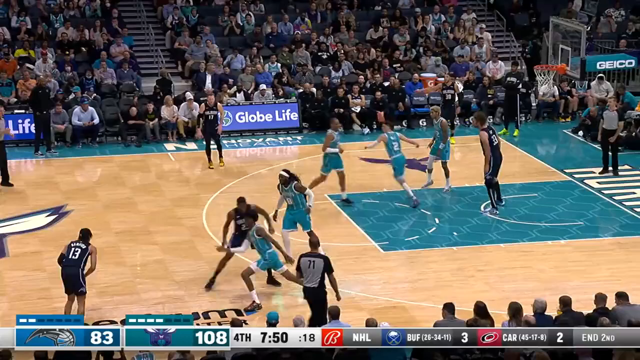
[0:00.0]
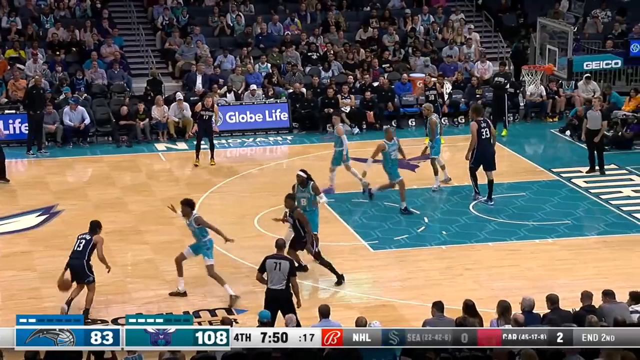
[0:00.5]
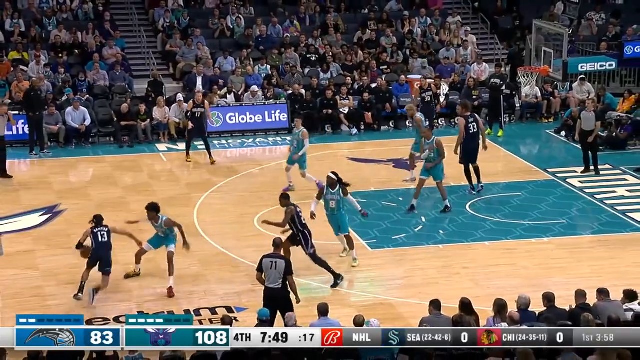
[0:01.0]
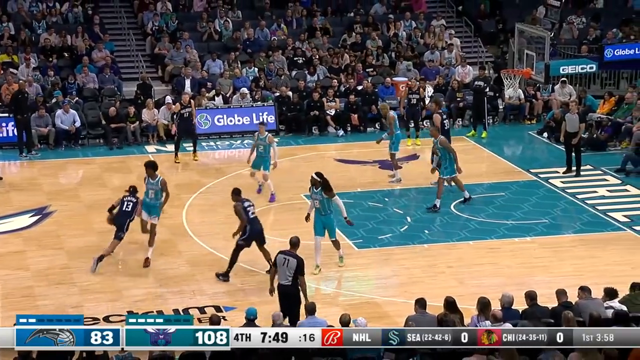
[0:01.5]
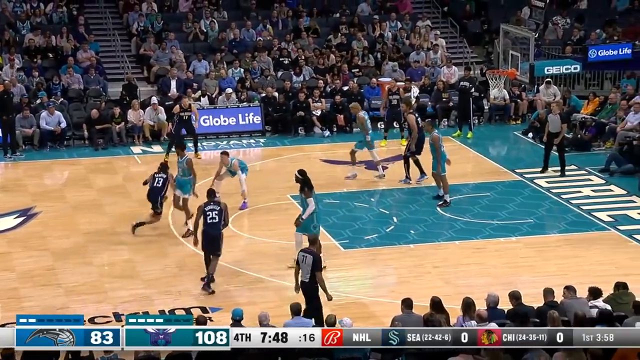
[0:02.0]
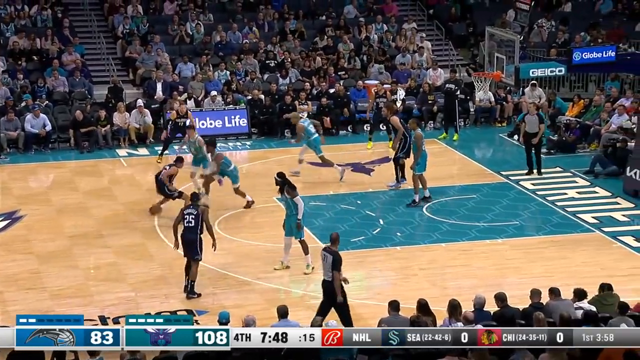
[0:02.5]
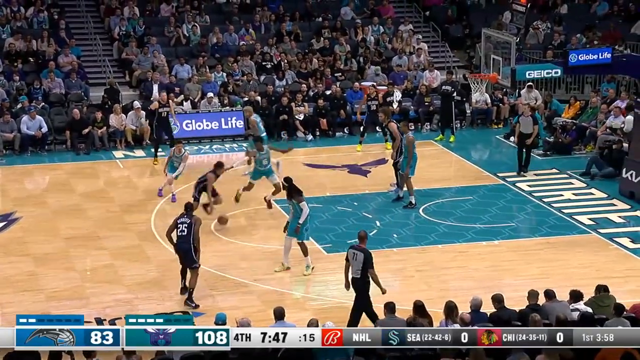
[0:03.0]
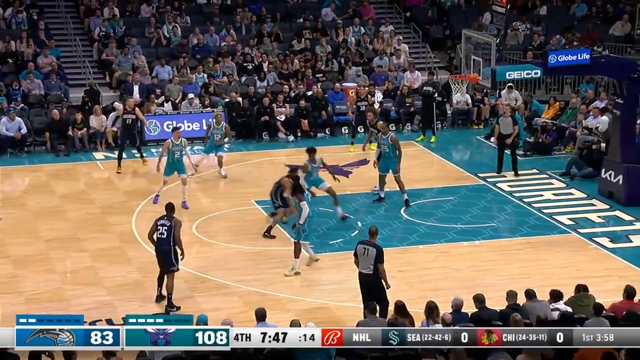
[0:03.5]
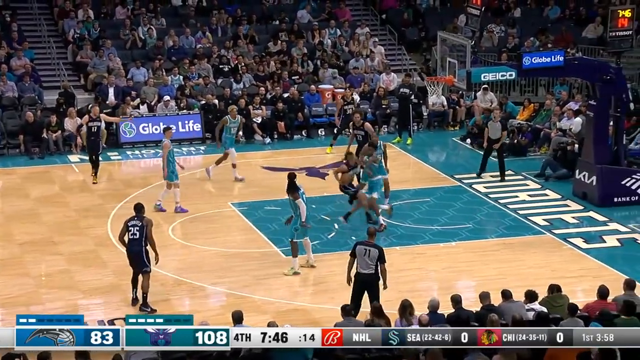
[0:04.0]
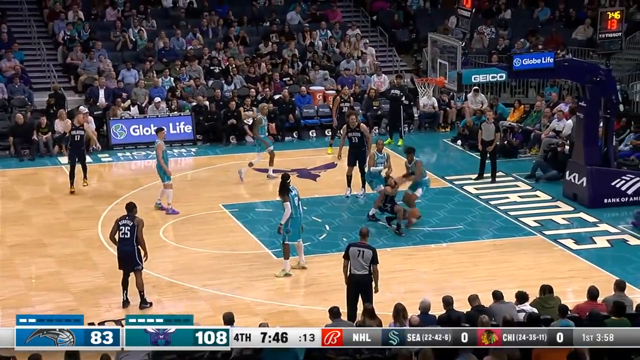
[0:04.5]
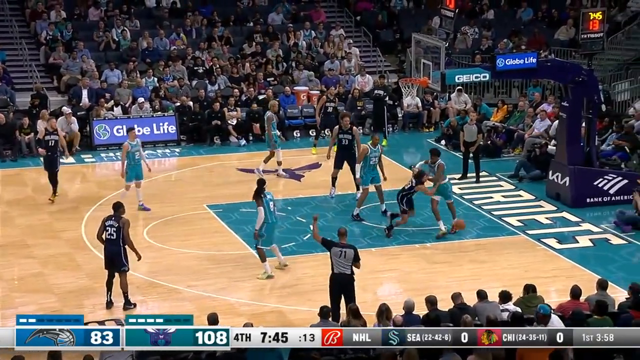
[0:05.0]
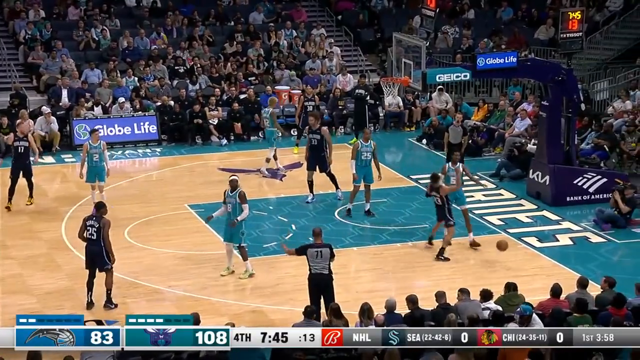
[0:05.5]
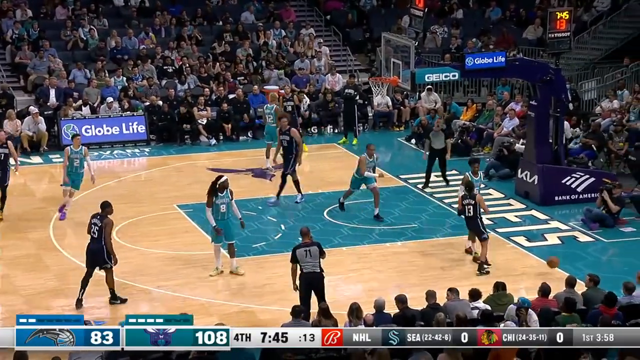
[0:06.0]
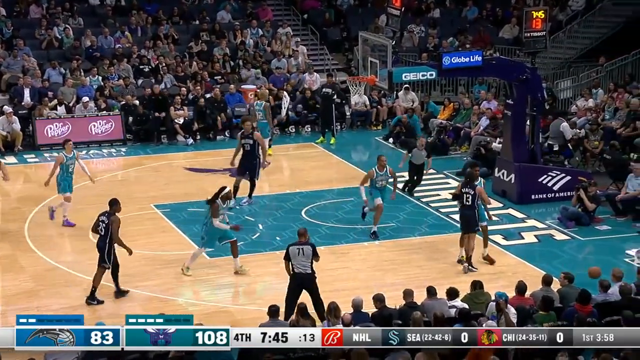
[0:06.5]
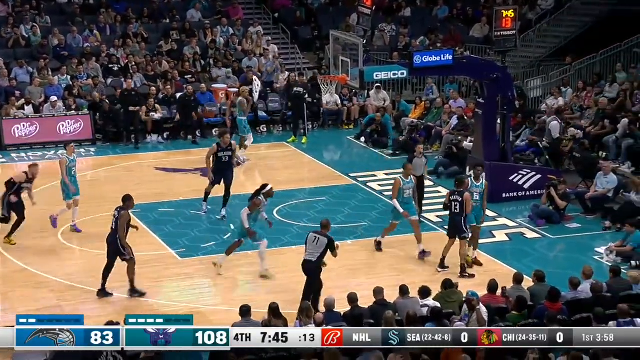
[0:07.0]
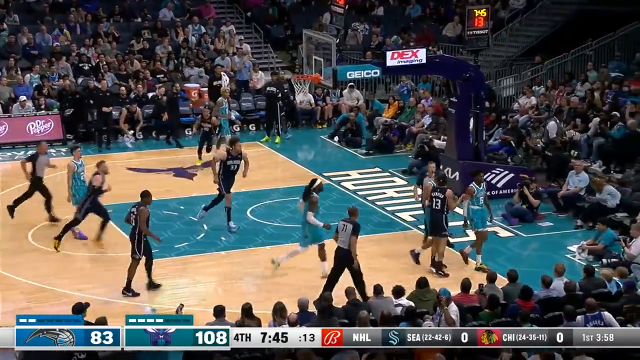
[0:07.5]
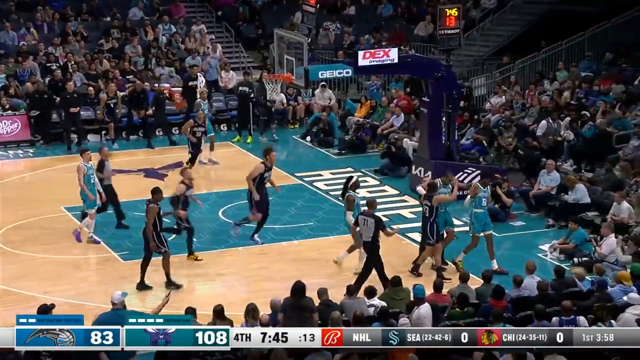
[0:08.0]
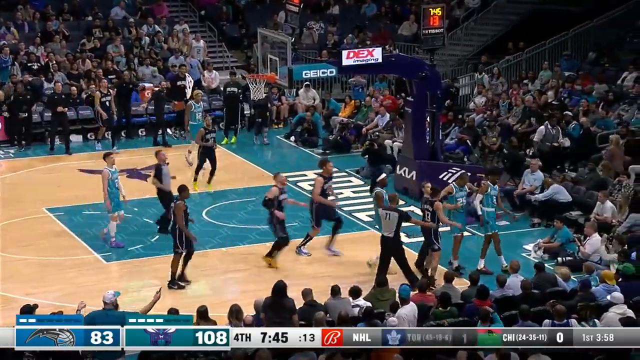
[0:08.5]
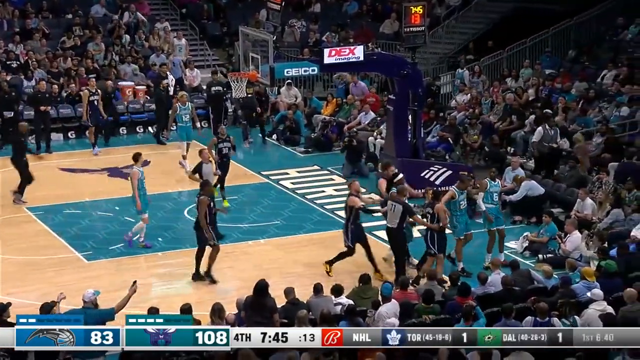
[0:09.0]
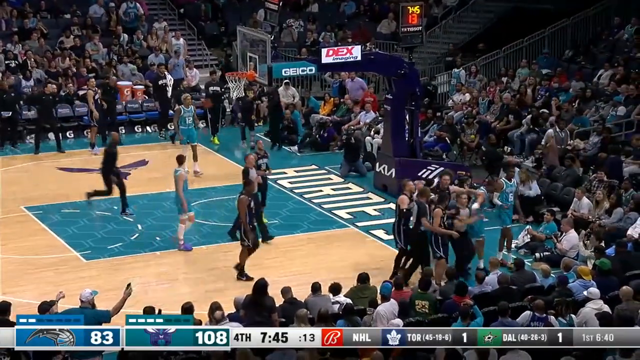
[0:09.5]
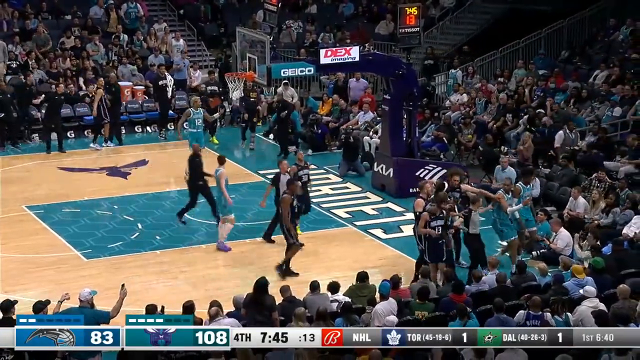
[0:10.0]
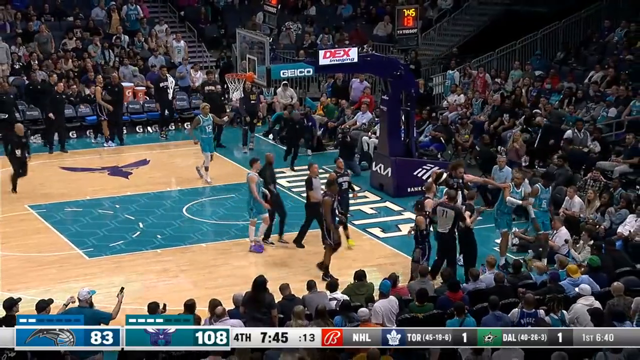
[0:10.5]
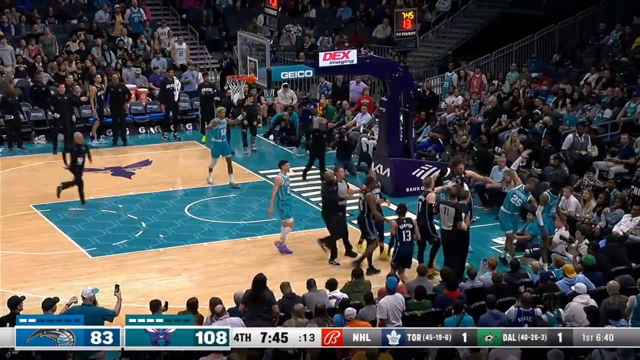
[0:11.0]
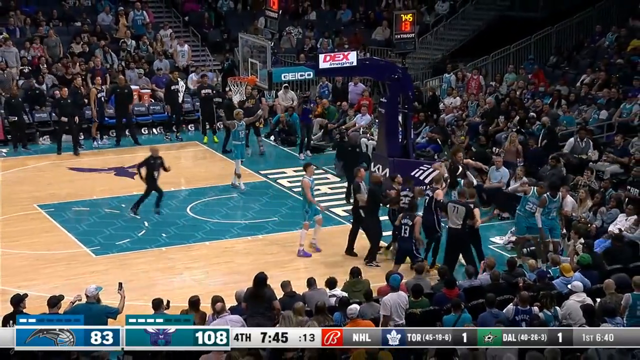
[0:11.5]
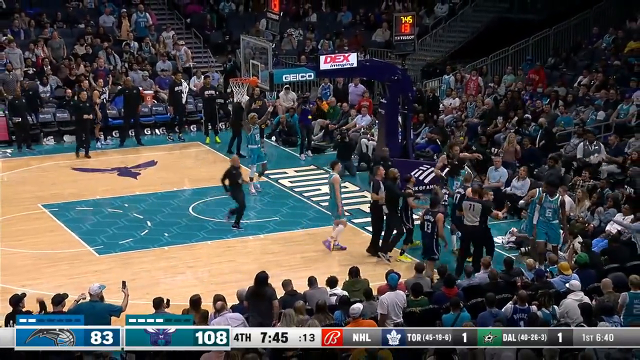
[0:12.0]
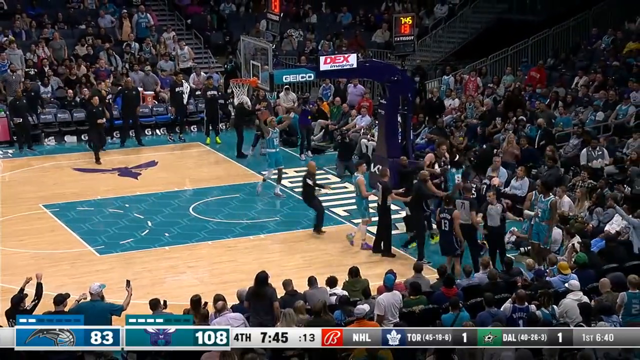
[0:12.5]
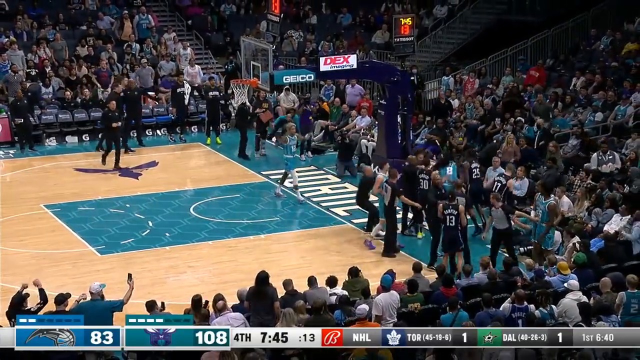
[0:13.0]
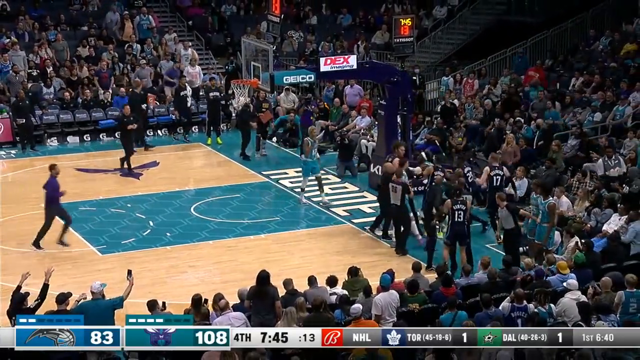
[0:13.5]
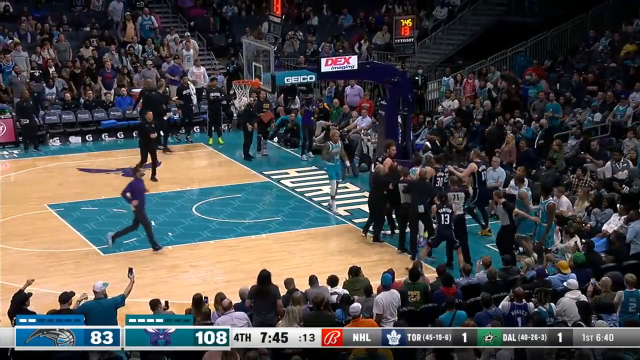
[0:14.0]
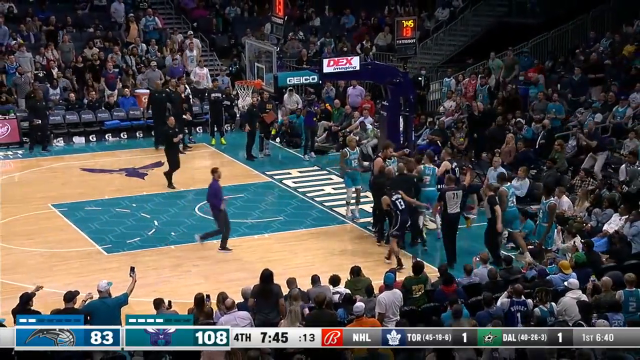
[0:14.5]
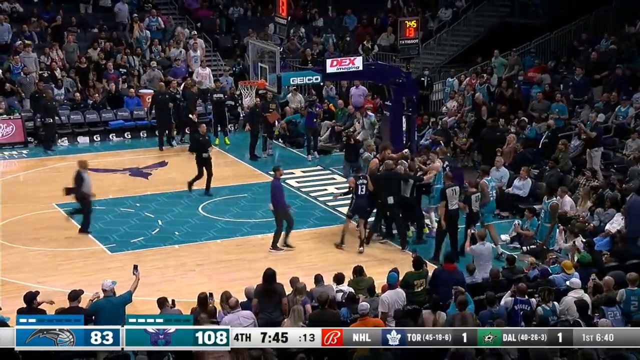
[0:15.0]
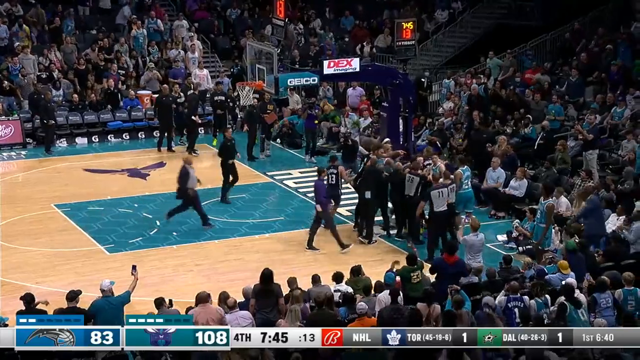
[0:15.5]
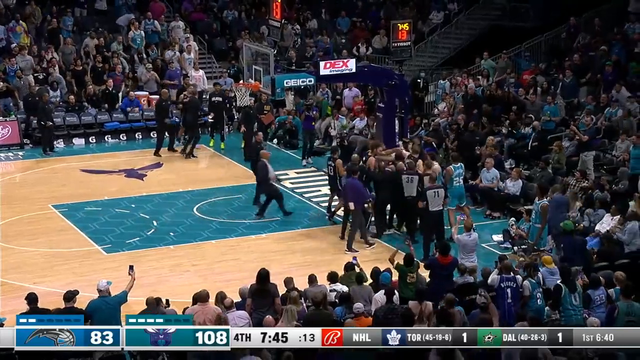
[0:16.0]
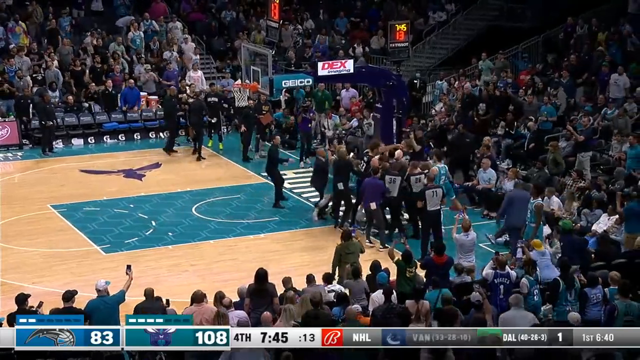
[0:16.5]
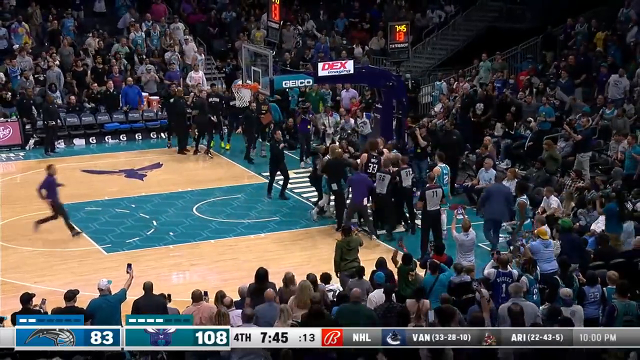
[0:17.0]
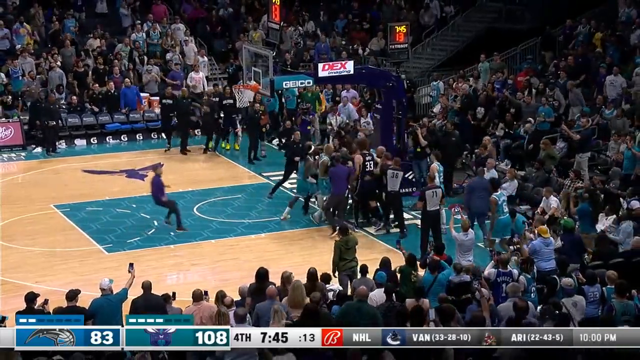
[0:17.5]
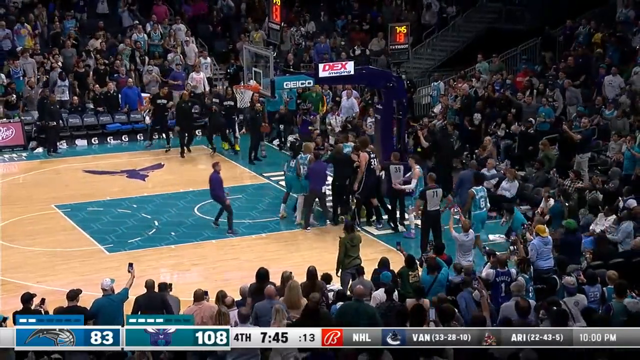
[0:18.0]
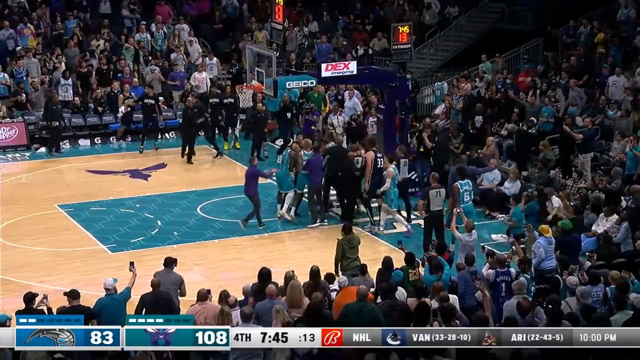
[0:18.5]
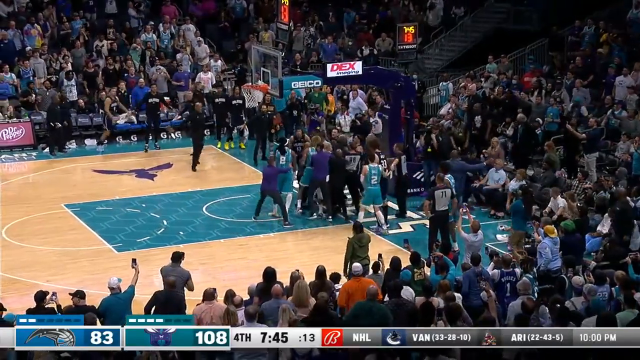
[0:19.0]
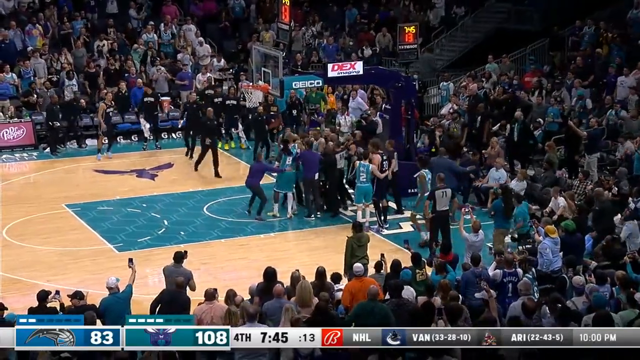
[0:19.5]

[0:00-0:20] Two men's basketball teams, apparently, play on a court, one in teal blue uniforms and the other in what looks like black uniforms, and some kind of altercation appears to happen. A player in black gets ready and charges to the basket, and he is stopped by a player on the teal blue team. It looks like there is a foul, and then the players all start getting in each other's faces. There is some shoving, the referees get involved, and it appears to be the start of a sort of fight on the court. Many people are in the stands, and signs and advertisements such as "Globe Life" are visible. The floor is a standard wood floor.